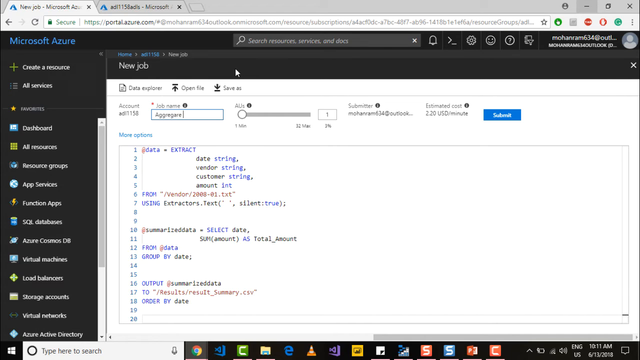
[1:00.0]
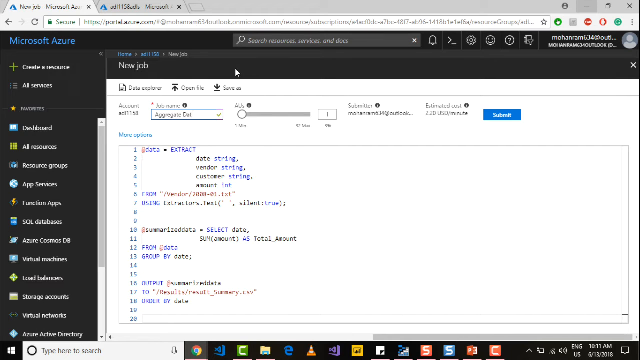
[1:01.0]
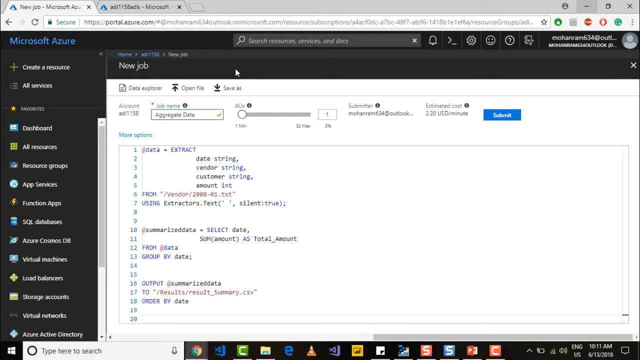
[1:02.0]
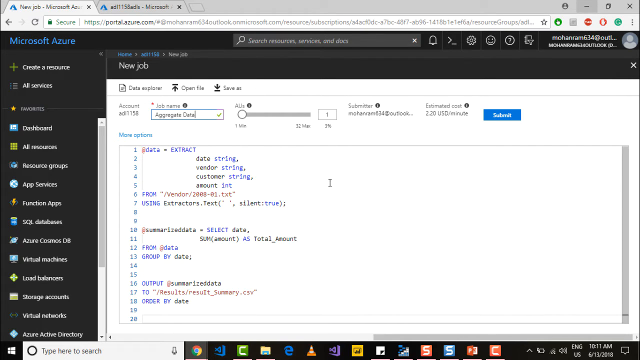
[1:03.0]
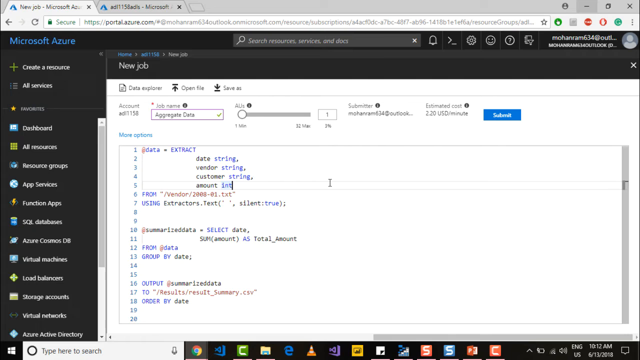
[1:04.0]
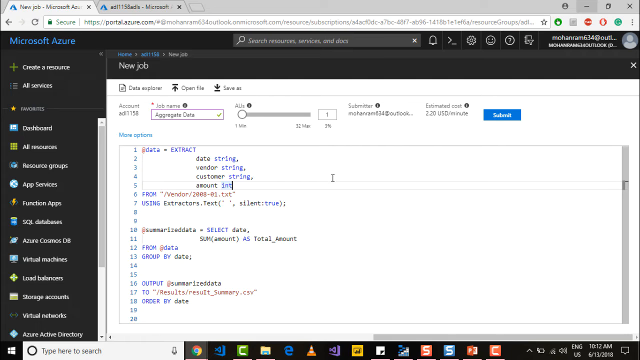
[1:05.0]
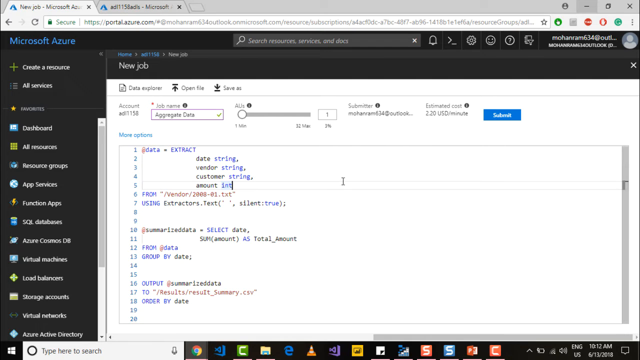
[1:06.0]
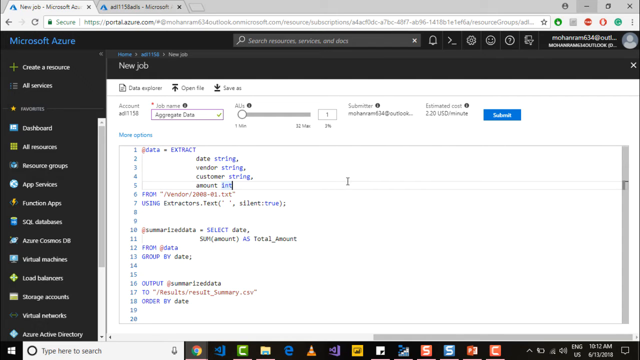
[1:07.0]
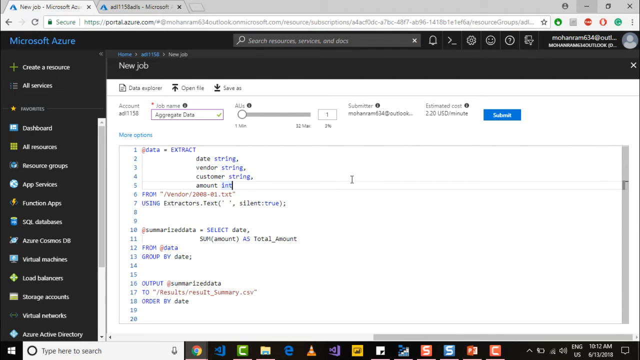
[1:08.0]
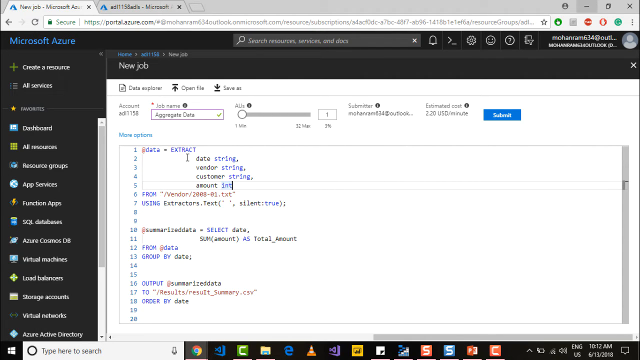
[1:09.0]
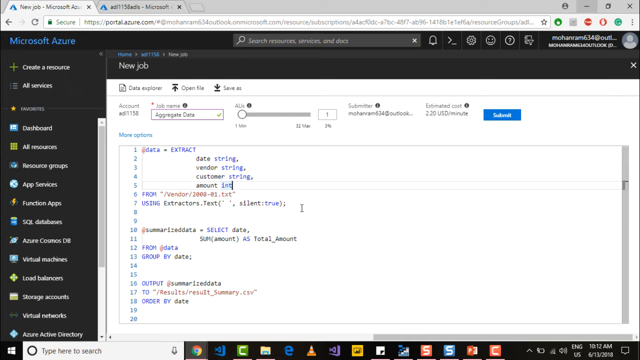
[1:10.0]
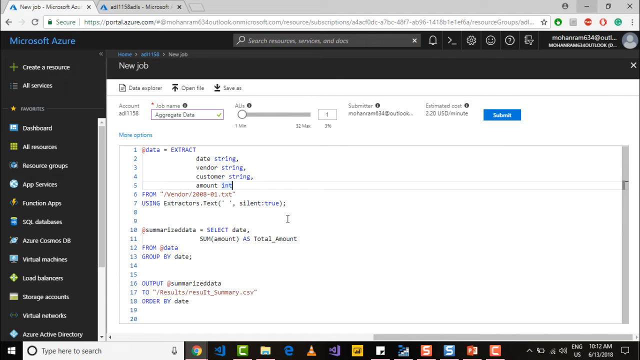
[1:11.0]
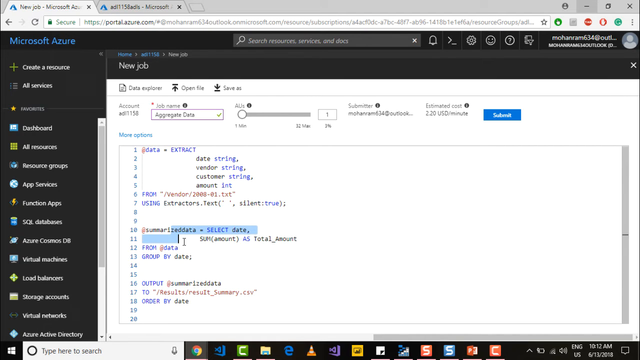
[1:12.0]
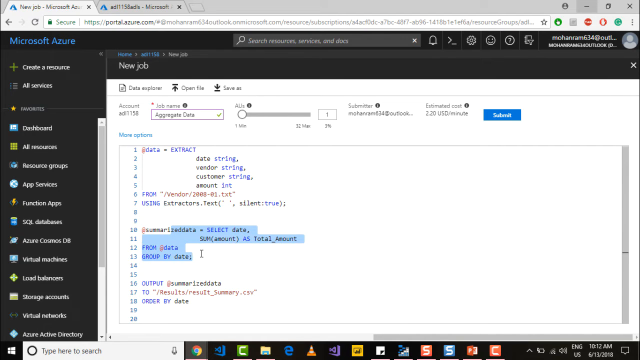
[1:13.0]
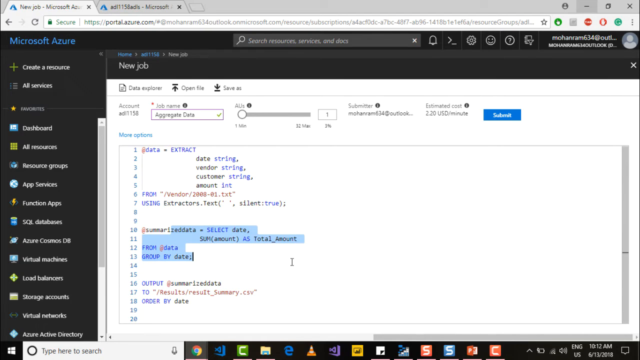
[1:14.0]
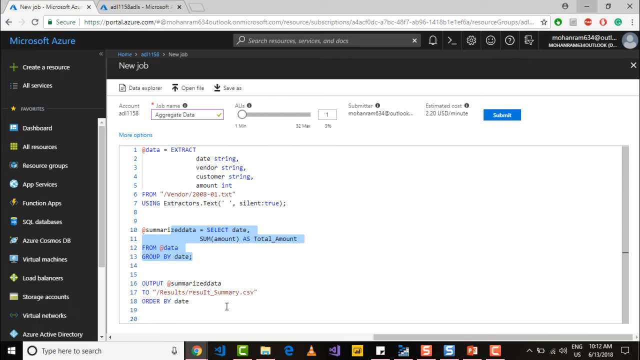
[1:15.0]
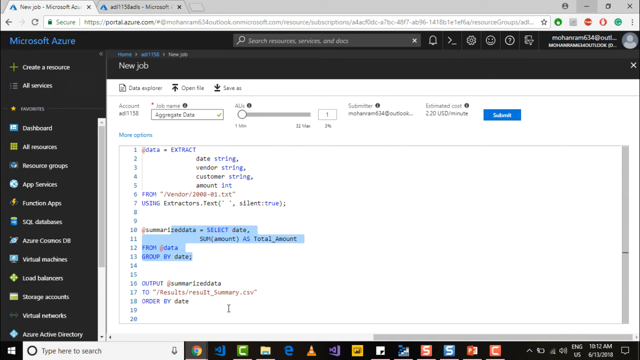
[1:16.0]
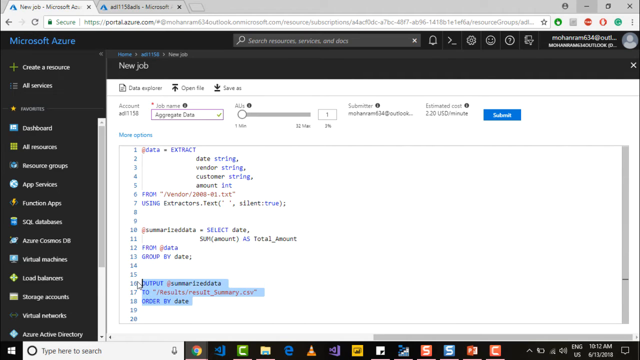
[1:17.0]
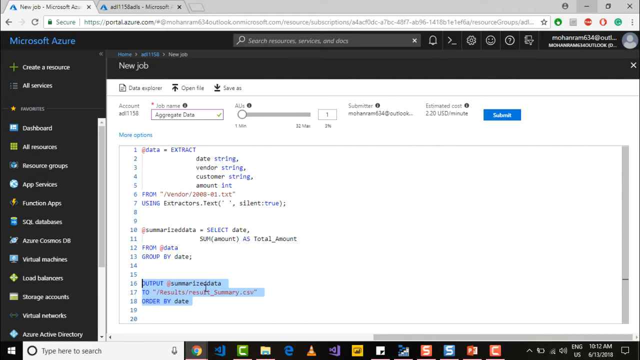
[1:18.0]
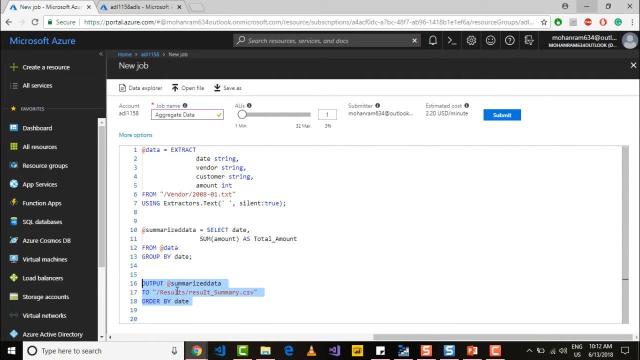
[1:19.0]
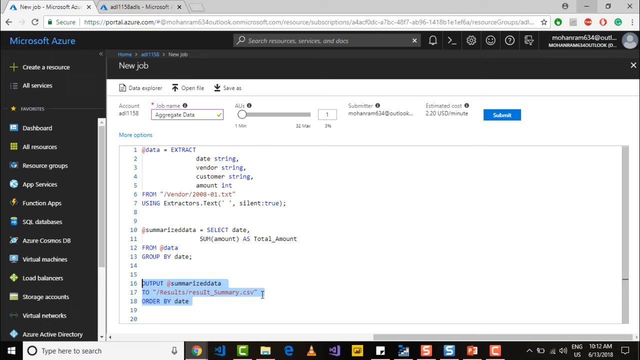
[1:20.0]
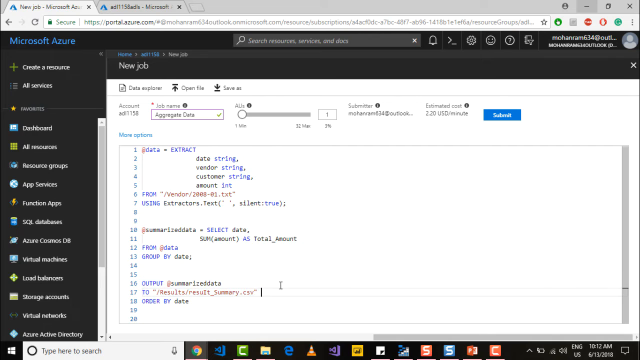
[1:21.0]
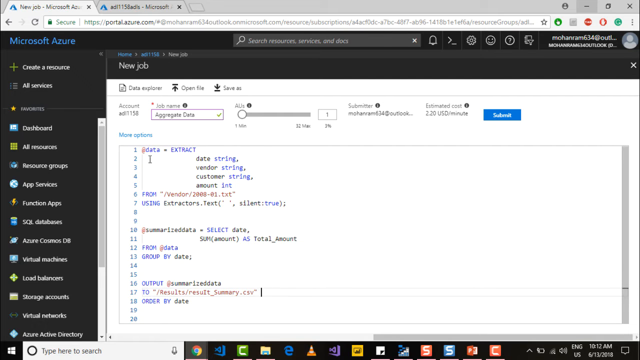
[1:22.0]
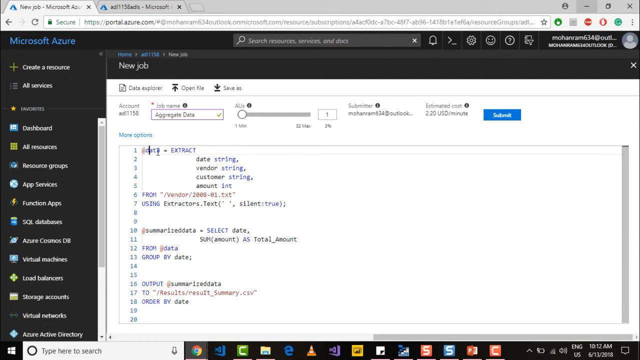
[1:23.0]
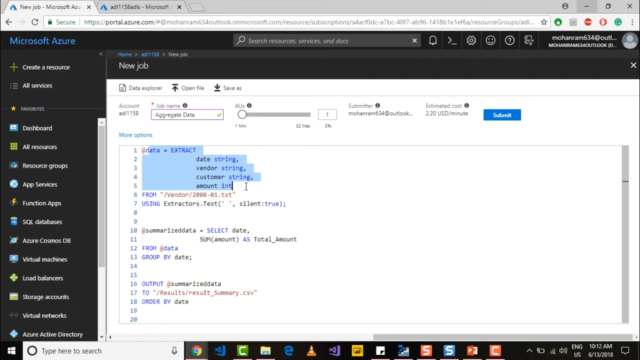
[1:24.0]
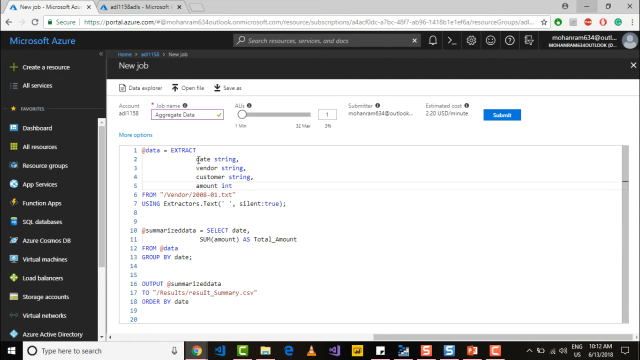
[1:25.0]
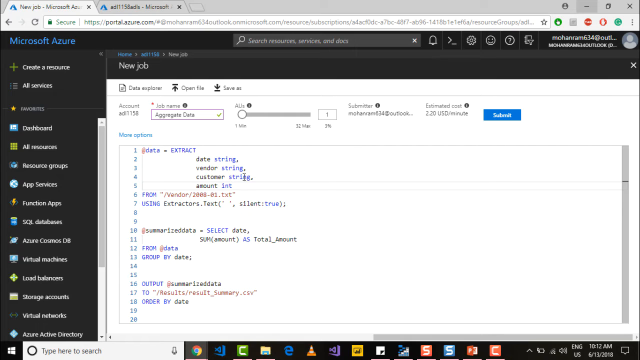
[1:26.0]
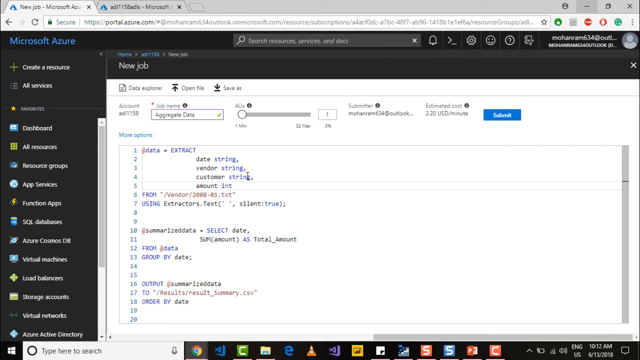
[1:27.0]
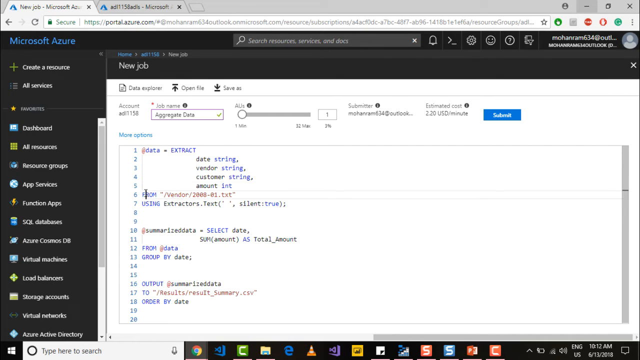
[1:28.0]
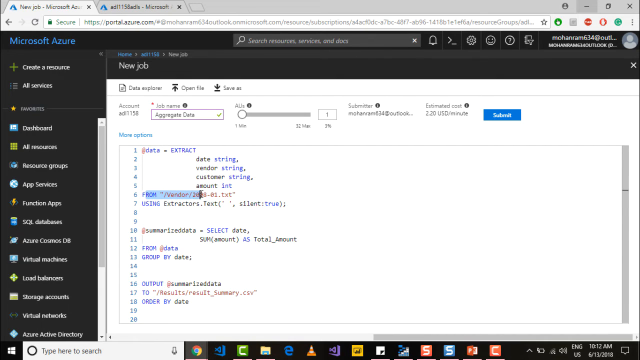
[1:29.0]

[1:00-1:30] A computer monitor shows an open tab reading "new job microsoft azure," and the address bar says "portal.azure.com." On the white page below, line one reads "data" and then "extract" in purple text. Further down is a lot of information, with the word "string" highlighted in purple, and line 16 reads "output summarized data." The mouse travels around and goes to the amount line on line 5. A highlighted area appears, covering line 16 through 13, then jumps to line 16 through 18. The mouse moves very quickly. In the upper right corner of the white page is a blue Submit button, with a column for Estimated Costs to its left, and in the upper left corner the job name has already been entered as "Aggregate."